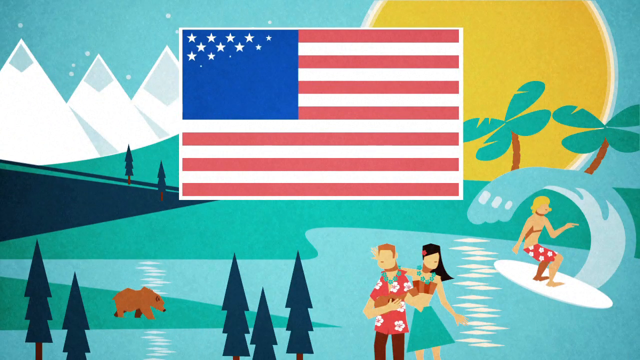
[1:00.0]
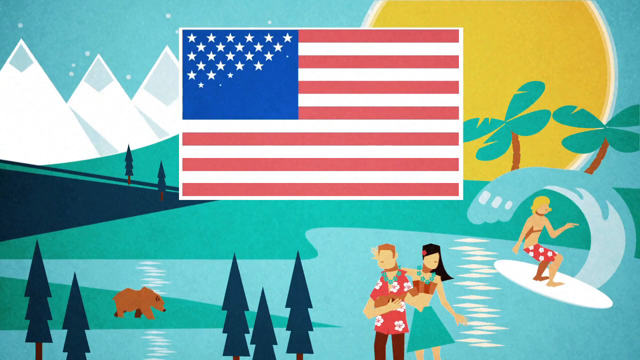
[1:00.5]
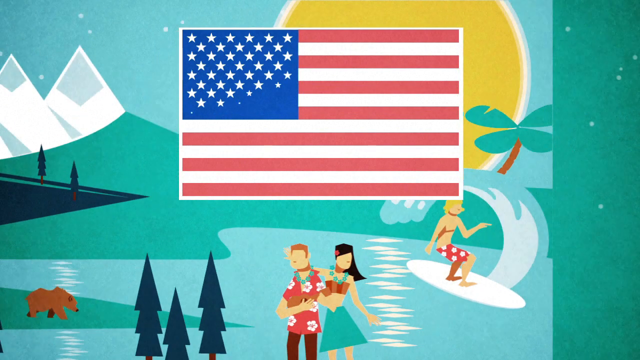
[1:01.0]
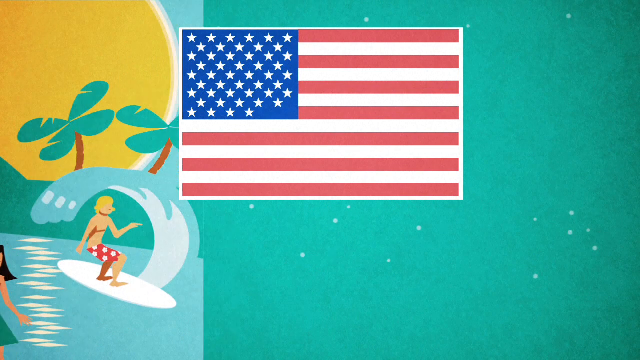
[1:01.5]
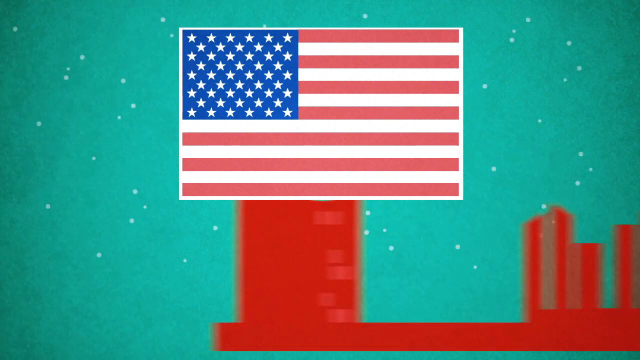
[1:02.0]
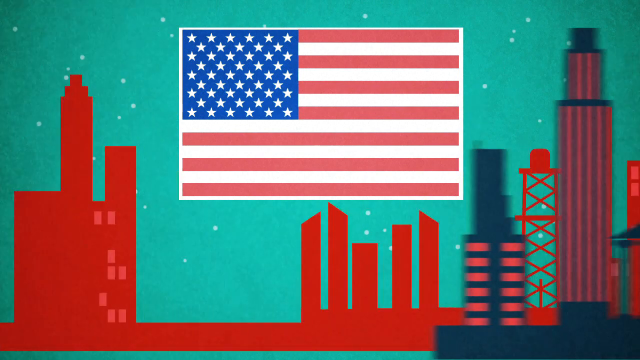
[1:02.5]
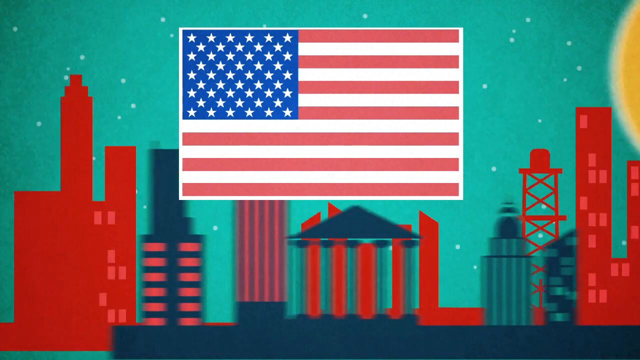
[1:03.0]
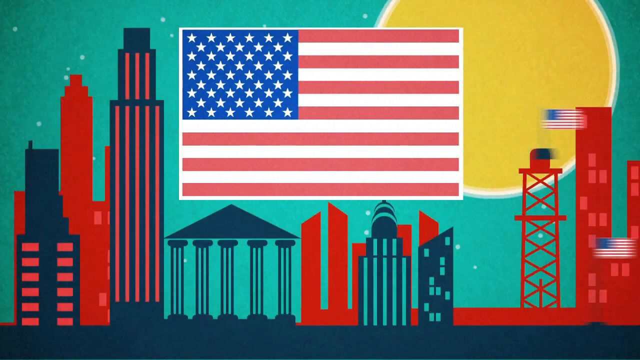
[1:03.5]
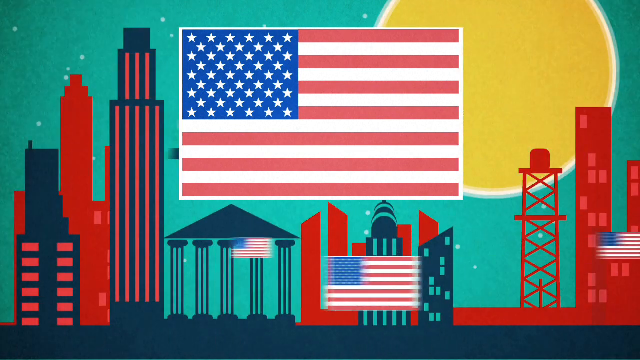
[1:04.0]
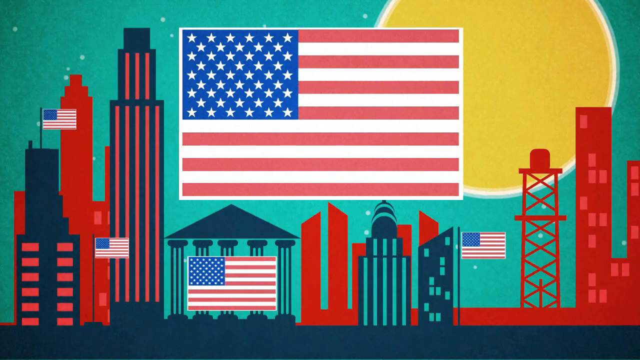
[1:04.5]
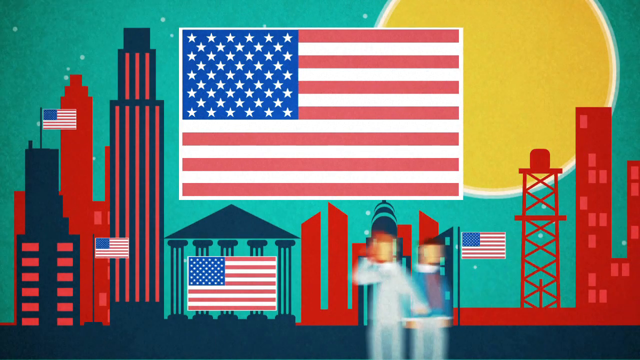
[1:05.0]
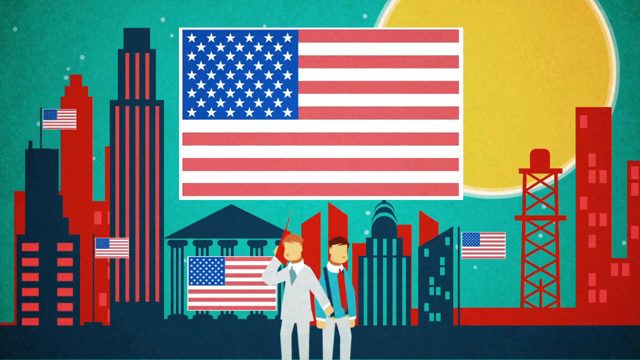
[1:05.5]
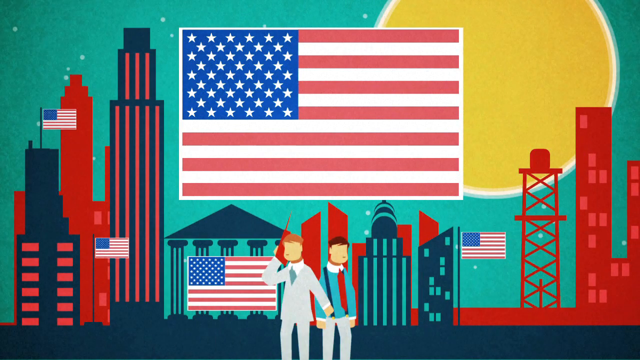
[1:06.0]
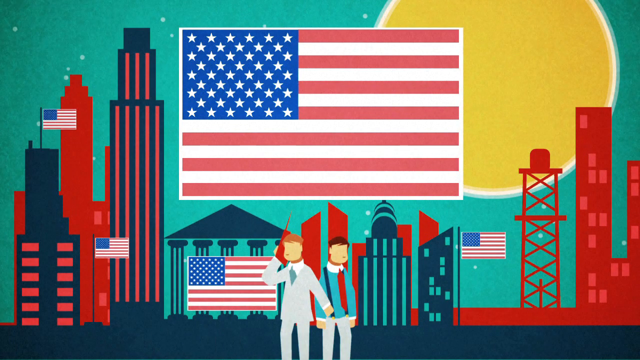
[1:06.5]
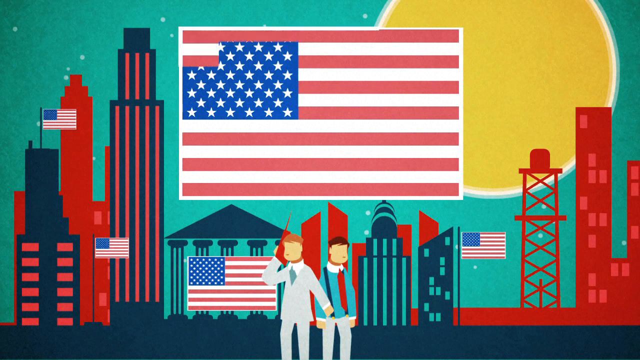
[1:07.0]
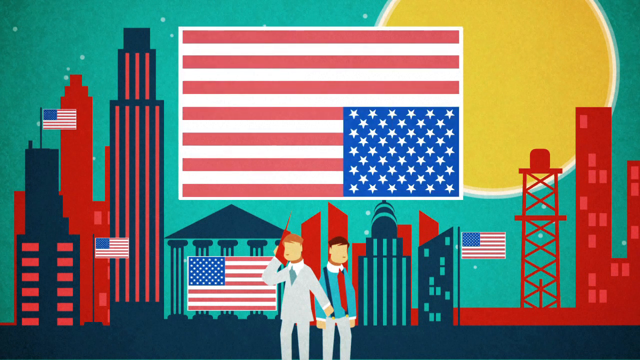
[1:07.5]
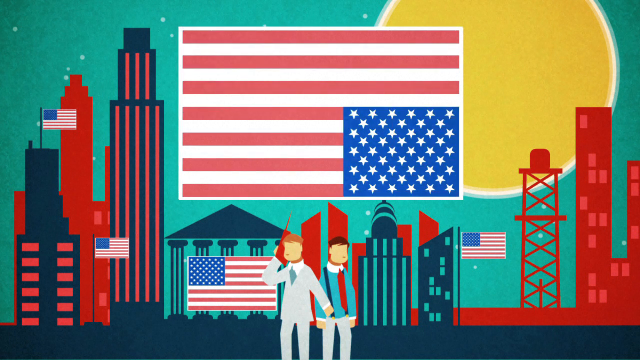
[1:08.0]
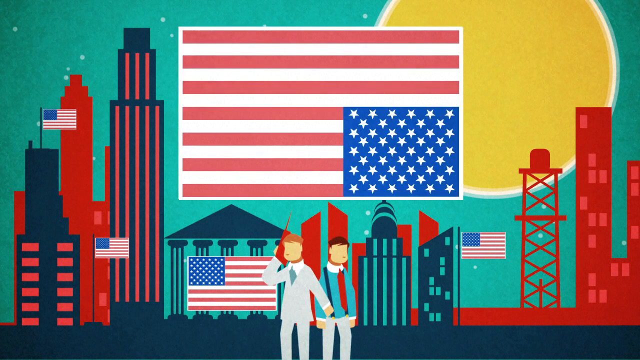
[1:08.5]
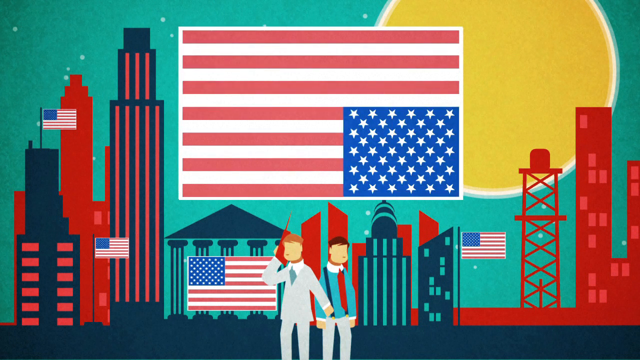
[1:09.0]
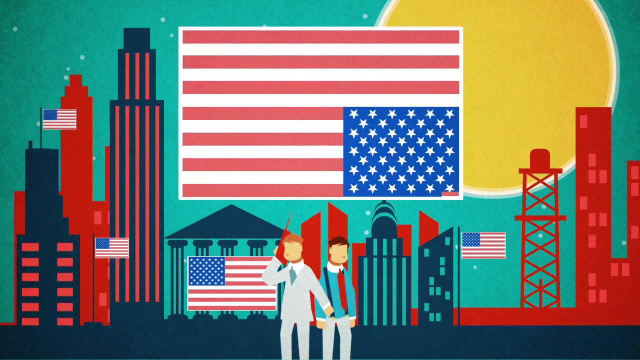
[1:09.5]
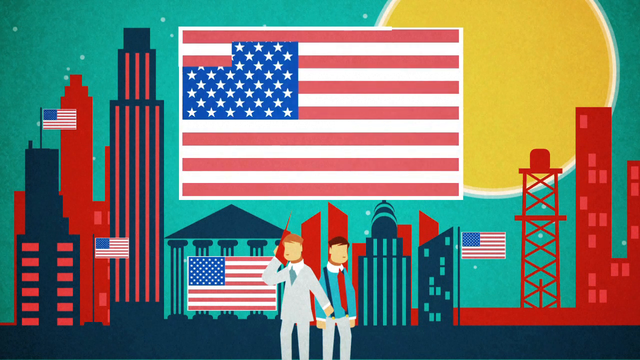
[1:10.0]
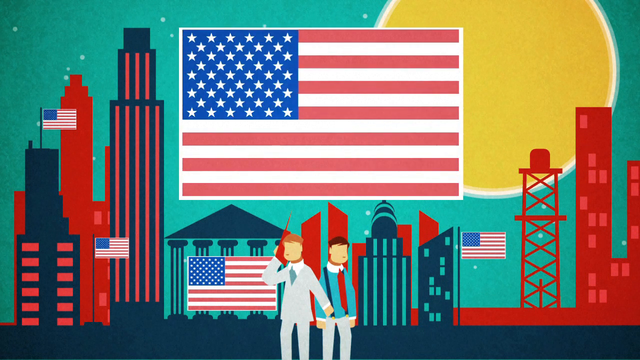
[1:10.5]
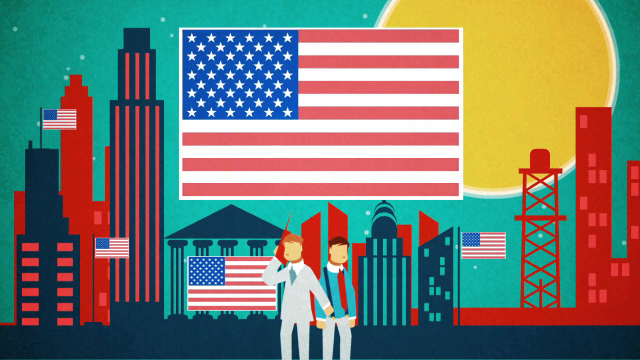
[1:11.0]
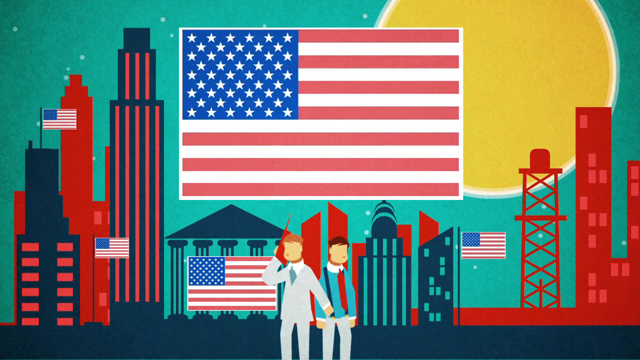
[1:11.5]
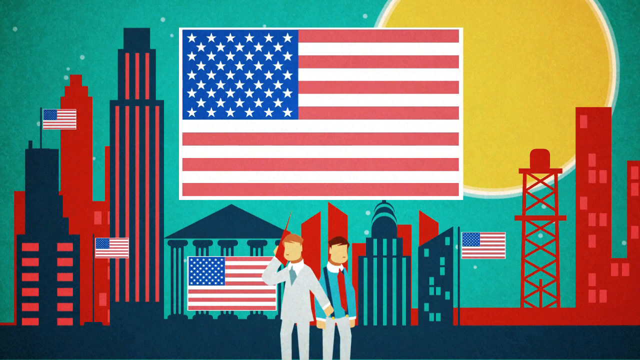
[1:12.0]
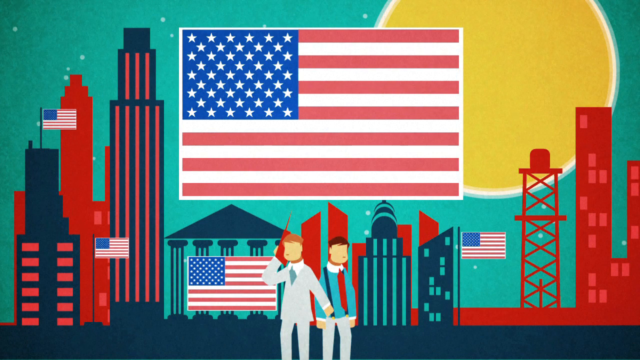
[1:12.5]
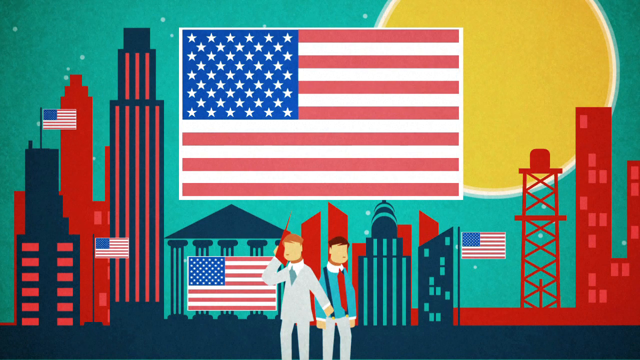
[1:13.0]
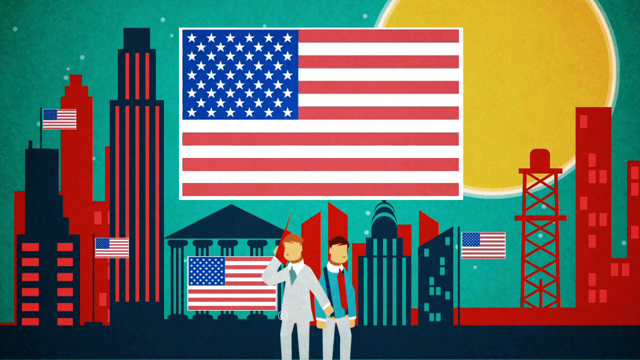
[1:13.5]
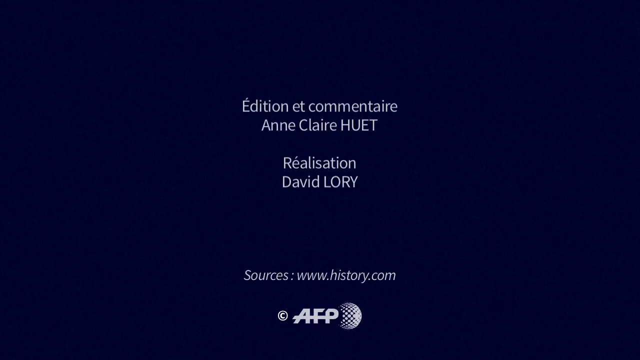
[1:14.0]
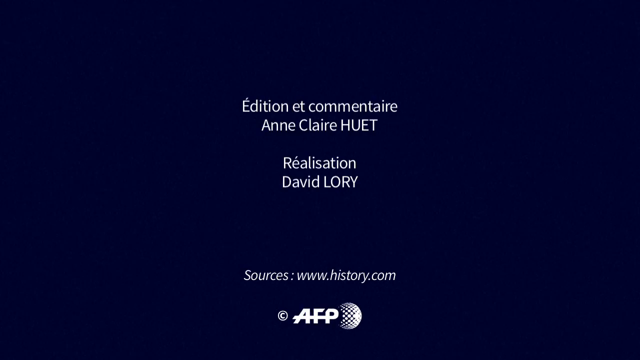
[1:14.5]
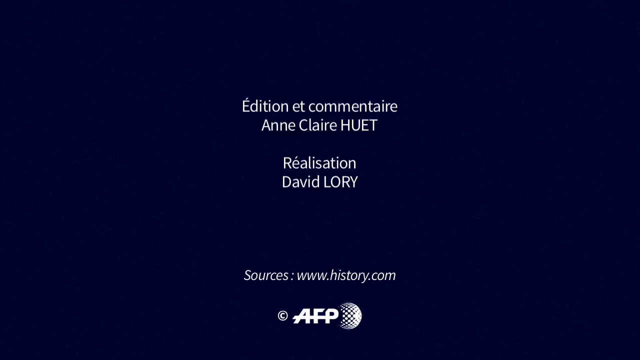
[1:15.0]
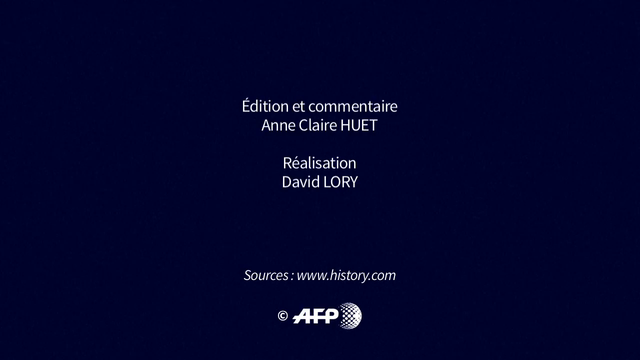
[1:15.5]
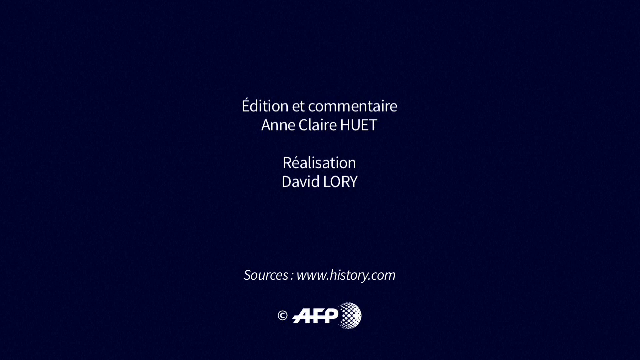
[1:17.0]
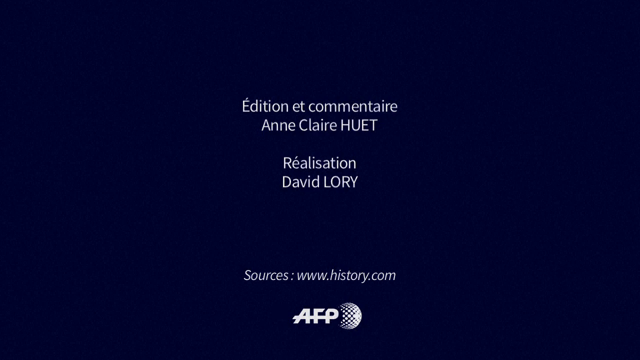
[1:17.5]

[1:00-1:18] The colorful graphical animation transitions rapidly every few seconds, showing the history of the United States. A large American flag remains stable in the upper middle of the screen, its stars changing from time to time as more are added while the animation progresses. The flag appears with more stars dotting it, showing the current number of stars on the American flag. Next, skyscrapers and towers transition in against a green background; they are drawn in geometric shapes with very few window details. More transitions follow as four more American flags pop up on the screen. Two men stand in the lower middle, both wearing ties, the one on the left in a gray jacket. Then the flag flips upside down and flips back to the correct position.